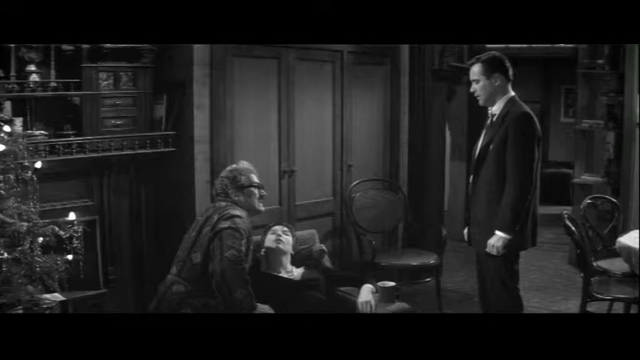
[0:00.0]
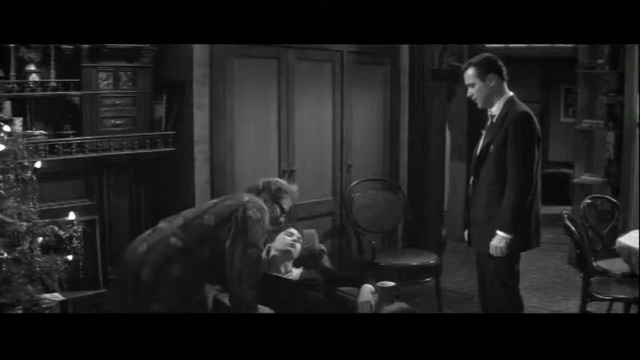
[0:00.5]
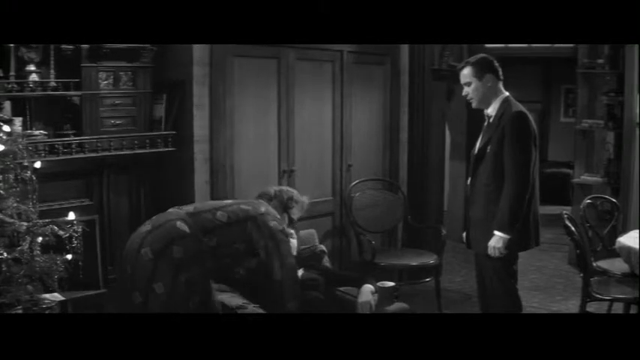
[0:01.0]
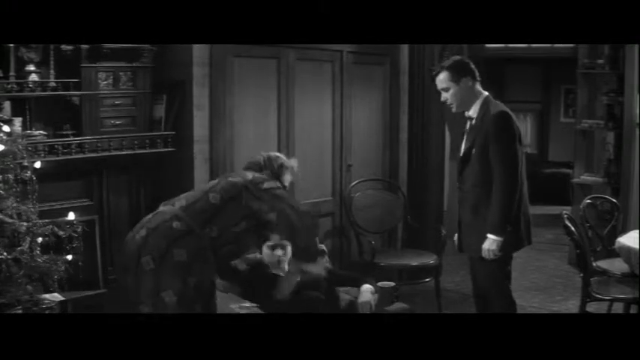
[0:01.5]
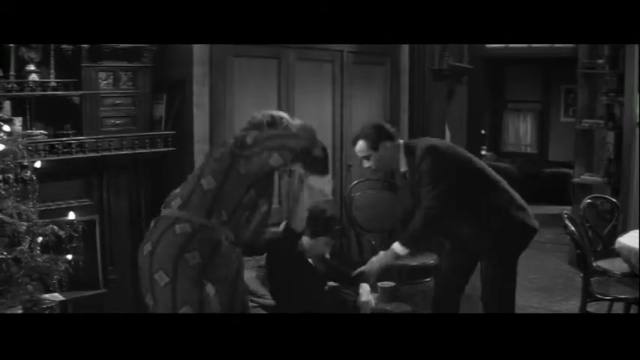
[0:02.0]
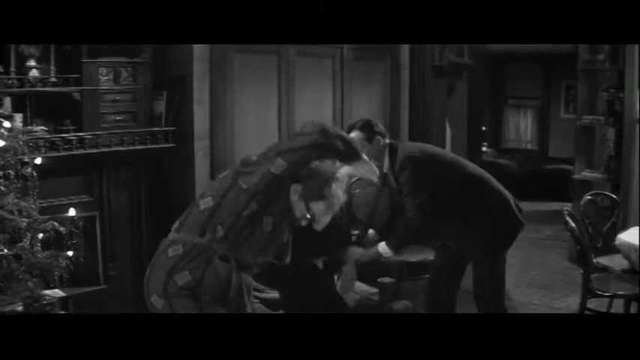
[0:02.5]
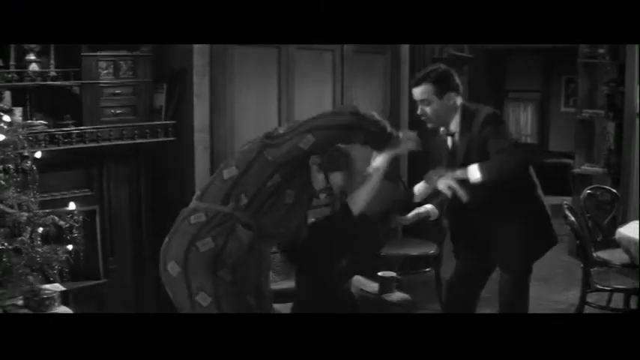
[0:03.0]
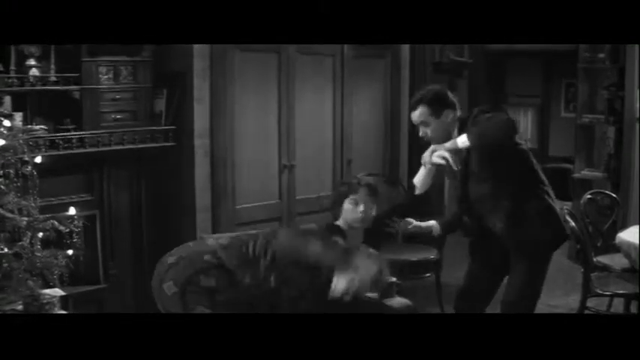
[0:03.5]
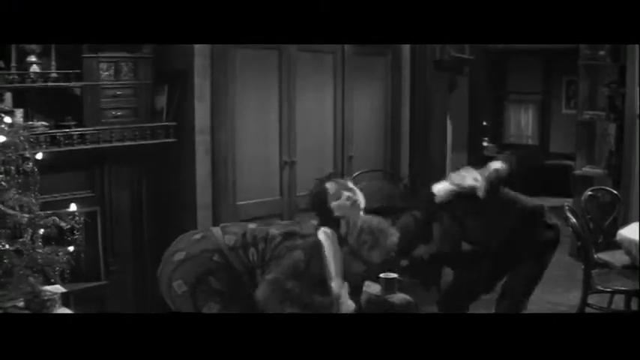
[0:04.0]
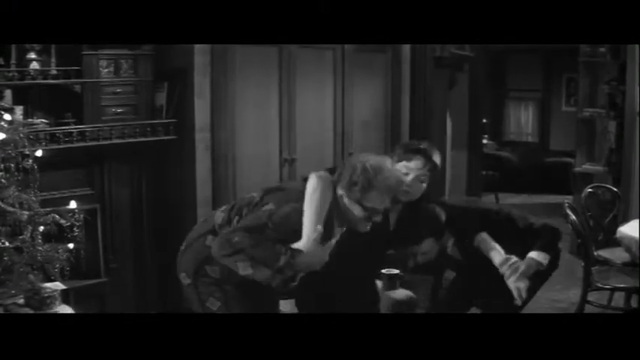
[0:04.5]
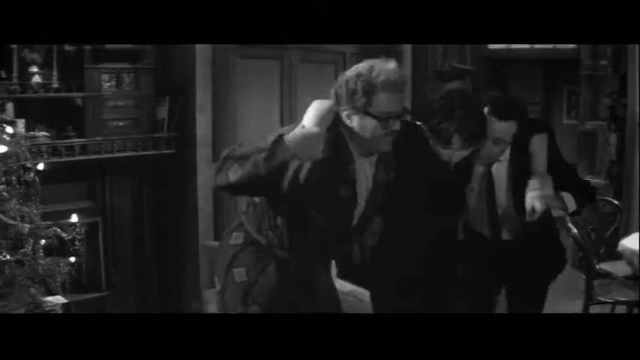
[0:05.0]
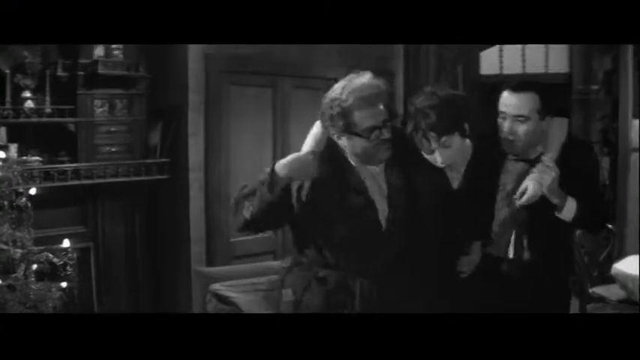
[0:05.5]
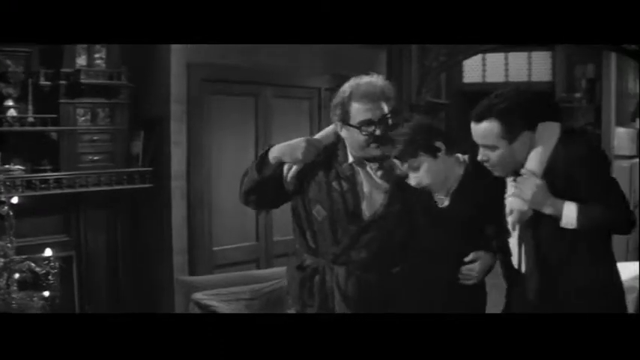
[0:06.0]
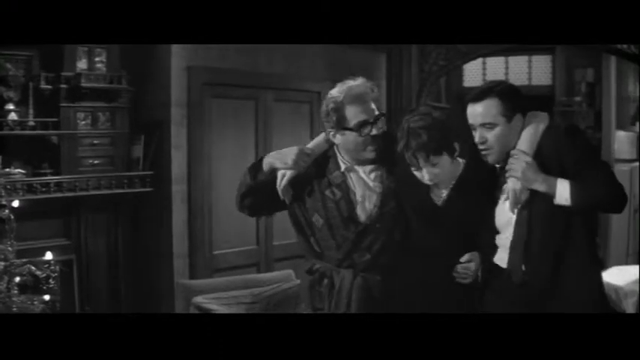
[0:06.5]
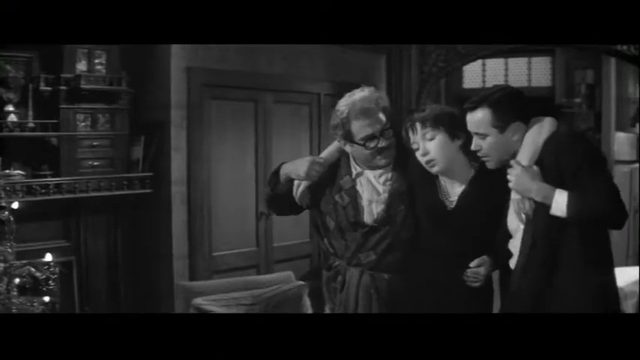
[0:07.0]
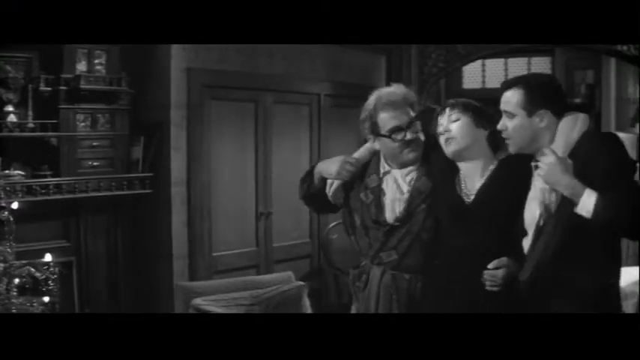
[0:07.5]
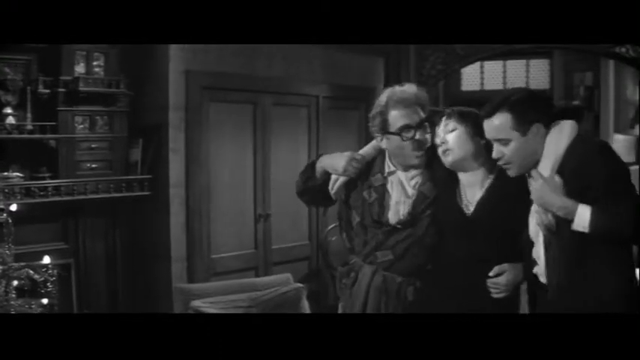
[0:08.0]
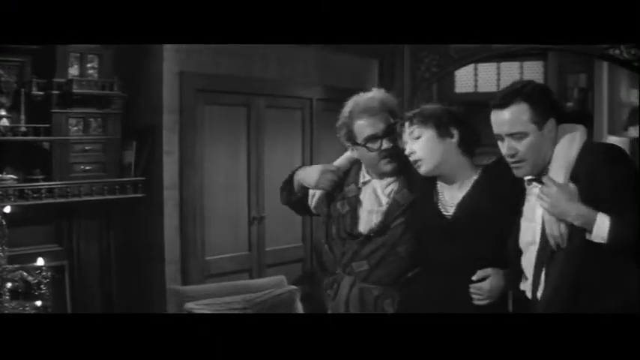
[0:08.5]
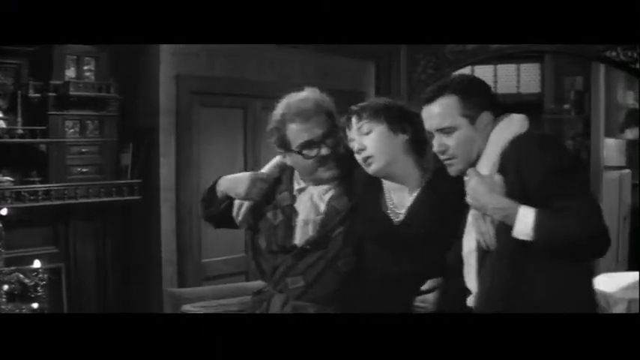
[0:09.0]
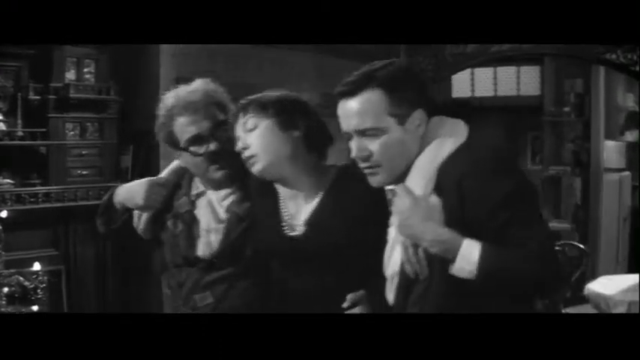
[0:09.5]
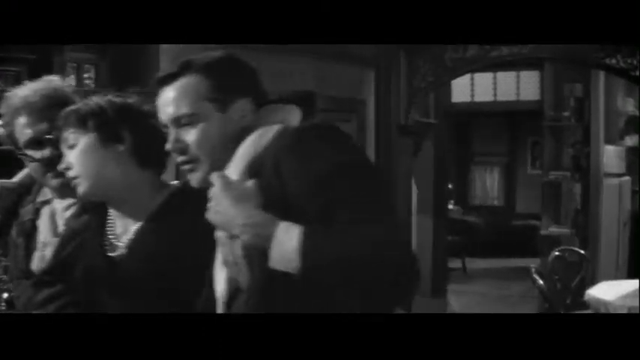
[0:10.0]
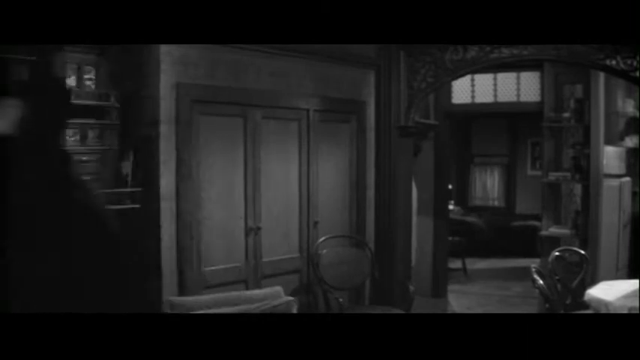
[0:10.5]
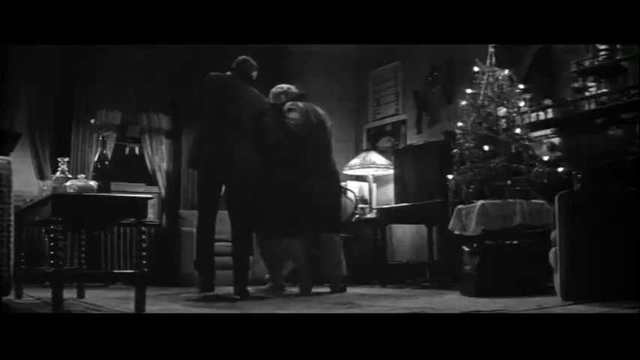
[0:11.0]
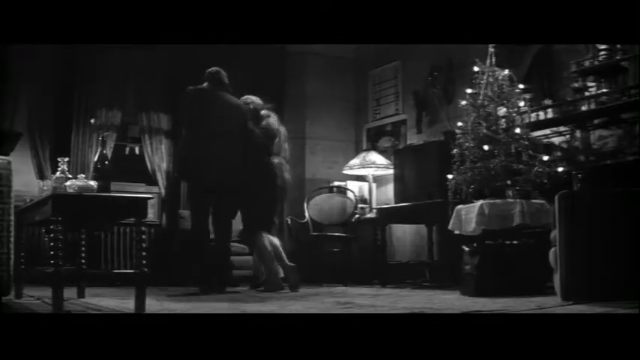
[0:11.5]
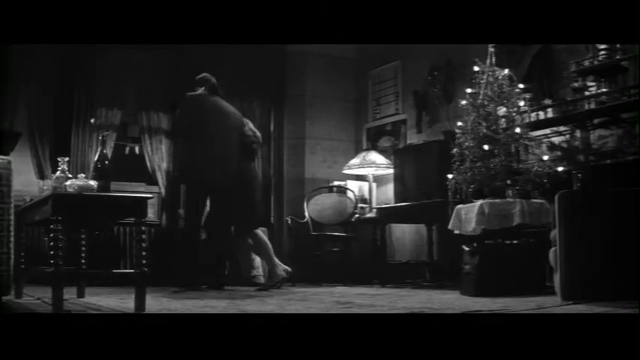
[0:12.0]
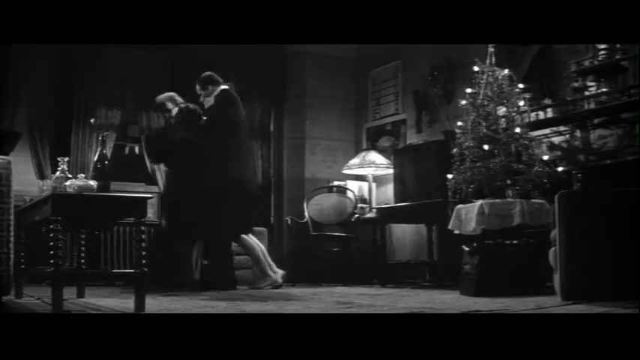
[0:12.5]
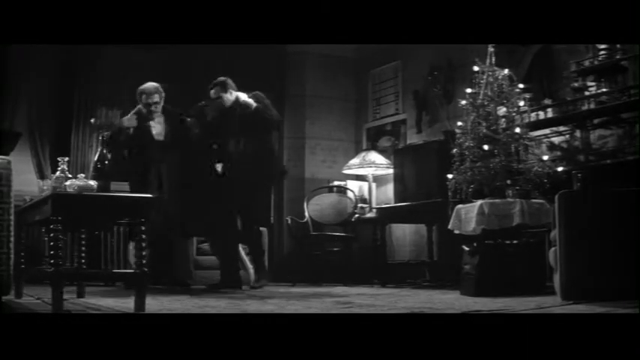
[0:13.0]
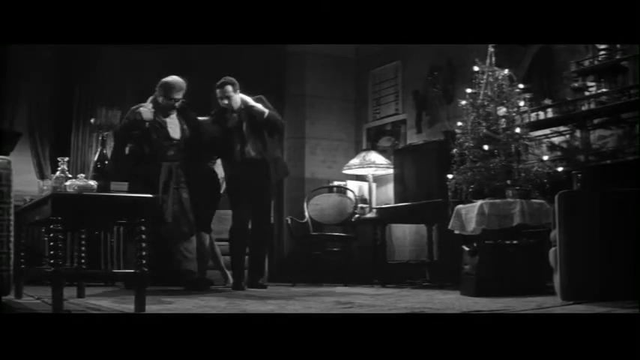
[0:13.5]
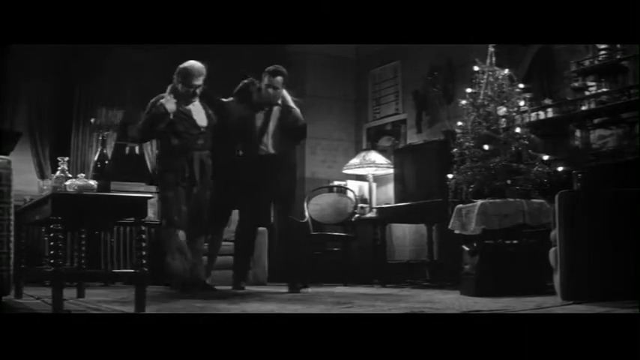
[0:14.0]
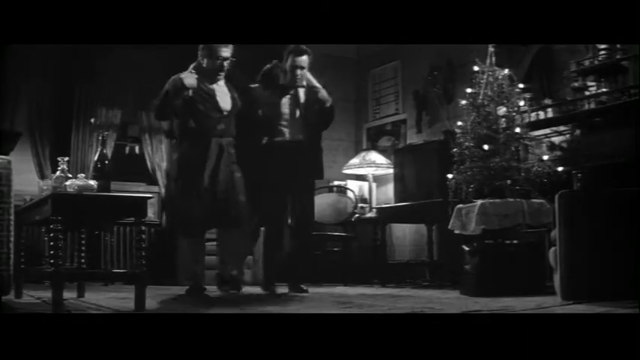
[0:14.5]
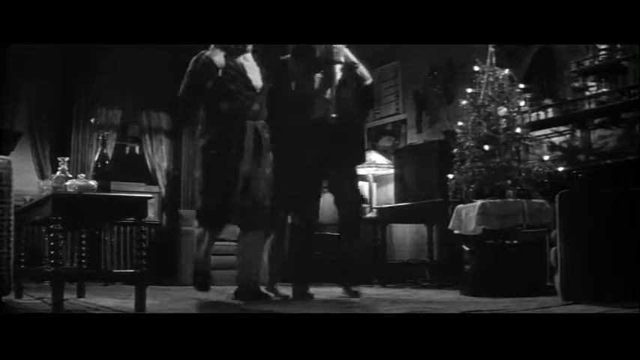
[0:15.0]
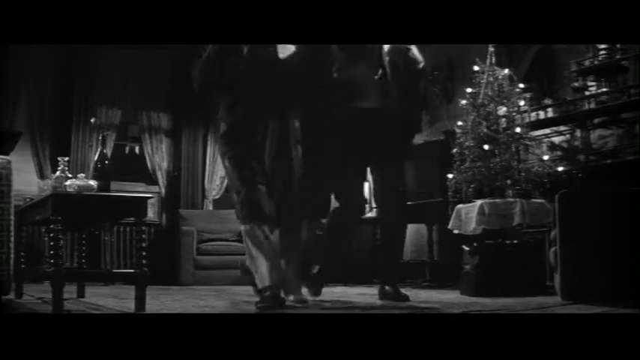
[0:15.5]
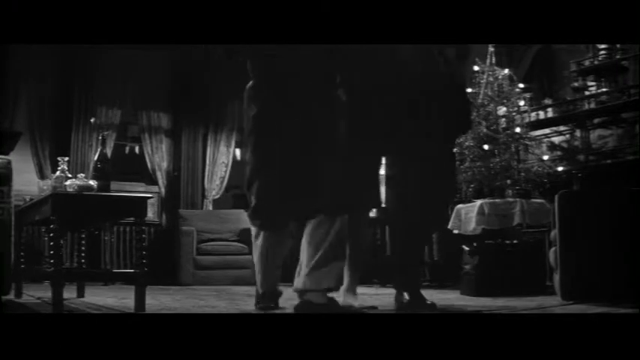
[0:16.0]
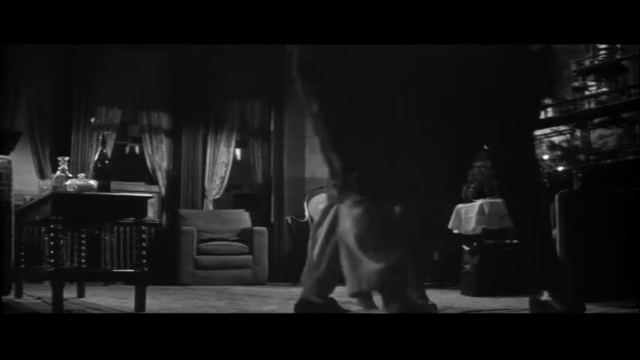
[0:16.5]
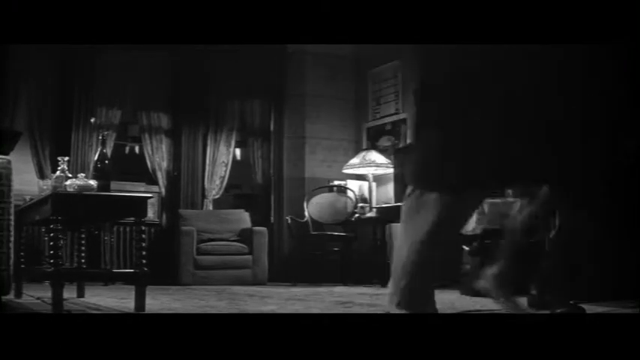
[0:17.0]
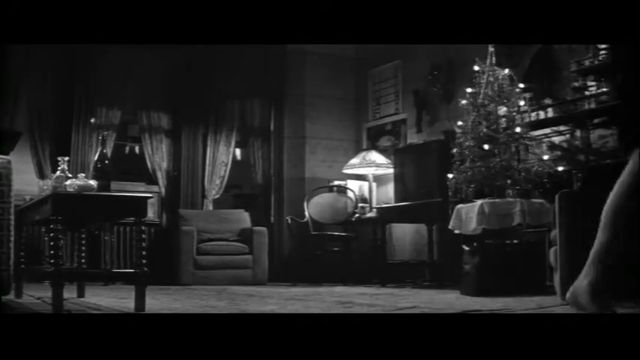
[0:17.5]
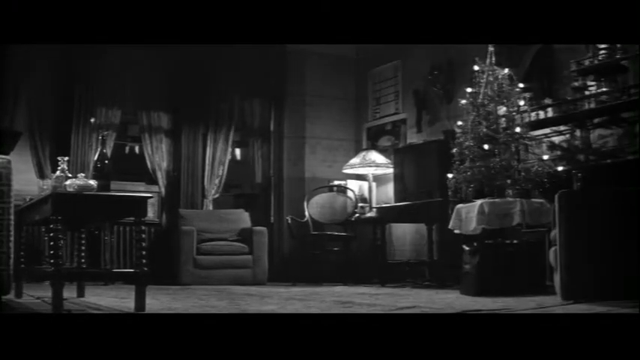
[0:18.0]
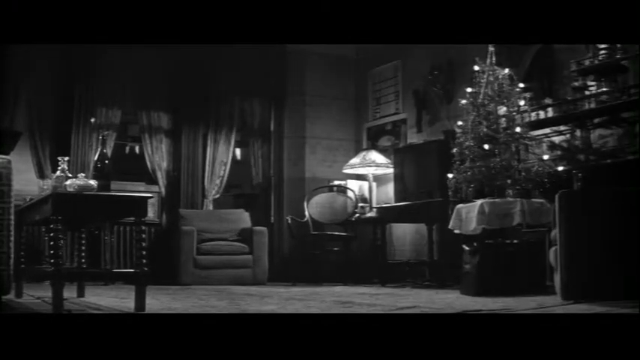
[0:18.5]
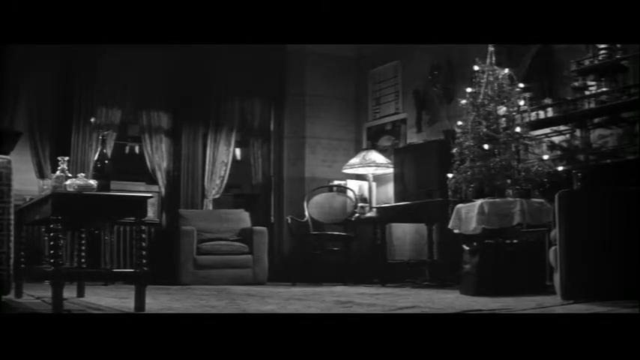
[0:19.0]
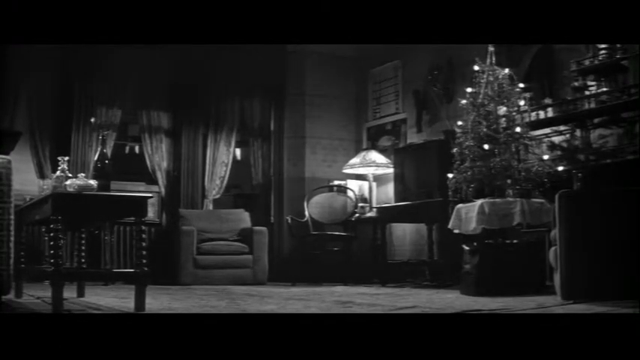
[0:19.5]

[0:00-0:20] An old black and white movie plays, with no color on screen. The scene takes place in a living room with some cupboards in the back and some lounging chairs, and what looks like a Christmas tree is slightly visible. A man in a suit is there along with a lady who is passed out, either drunk or sleeping, and an older man wearing a robe stands next to her, looking up at the man in the suit. The older man puts one of the lady's arms around him and motions for the man in the suit to put her hand around his neck as well. Supporting her, the two men begin to walk, pacing back and forth with her, possibly to sober her up. More of the living room comes into view: a couch, the now fully visible Christmas tree, a TV, a coffee table, and some windows with curtains in the back. The older man is in pajamas or sleepwear. They walk off screen, presumably taking the woman to her bedroom.